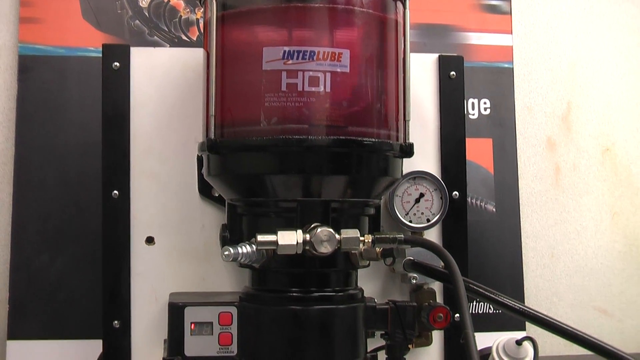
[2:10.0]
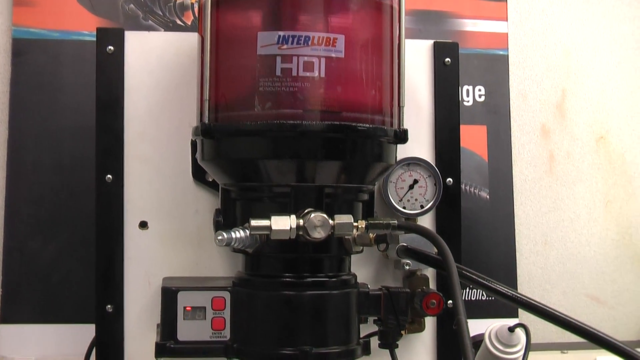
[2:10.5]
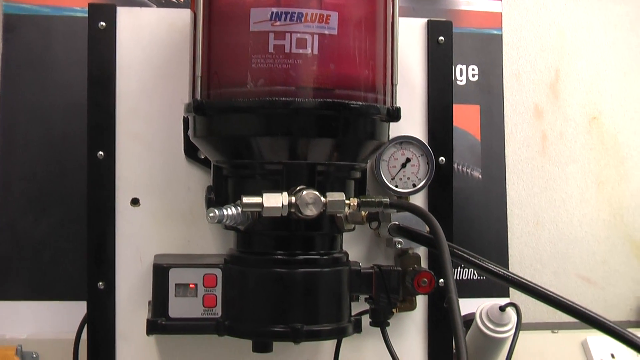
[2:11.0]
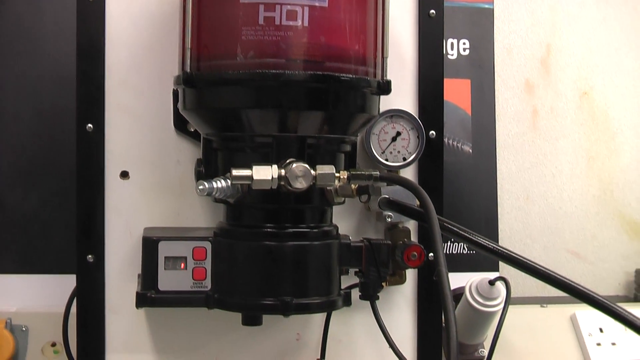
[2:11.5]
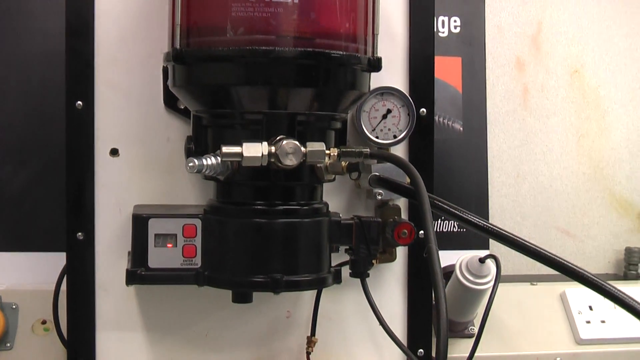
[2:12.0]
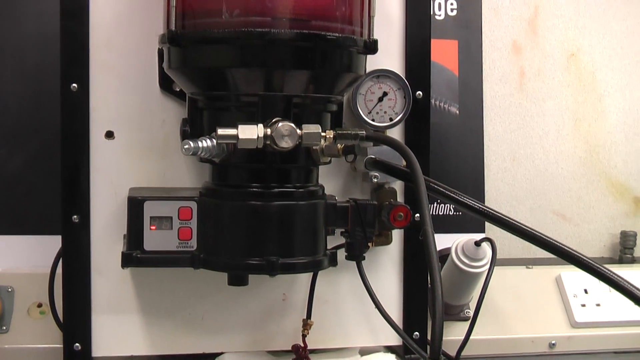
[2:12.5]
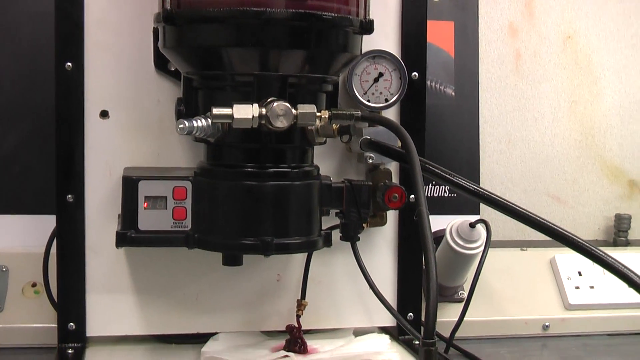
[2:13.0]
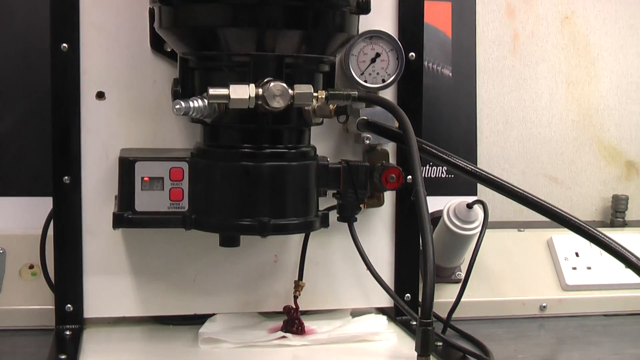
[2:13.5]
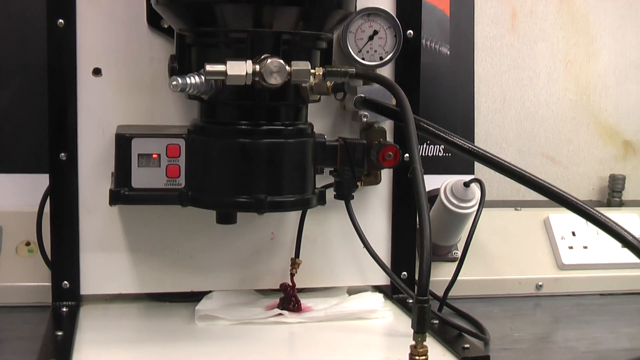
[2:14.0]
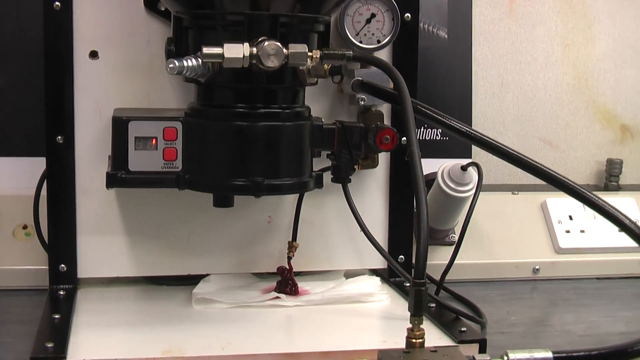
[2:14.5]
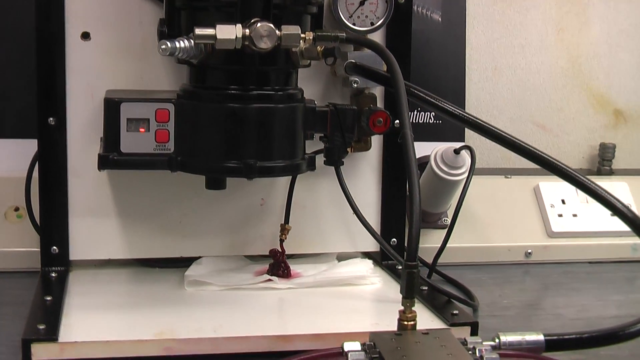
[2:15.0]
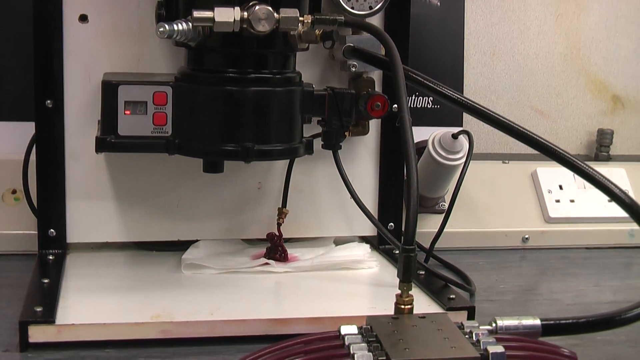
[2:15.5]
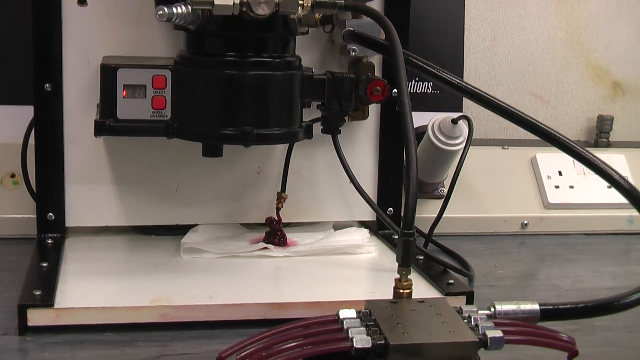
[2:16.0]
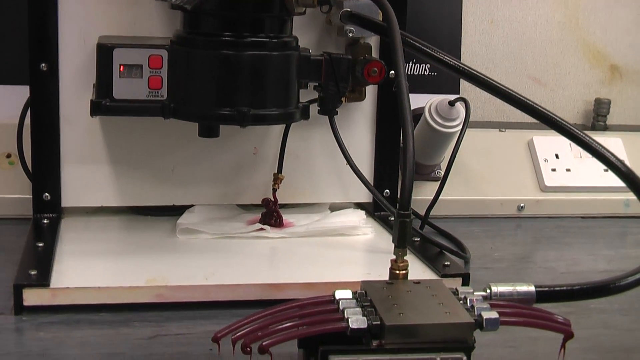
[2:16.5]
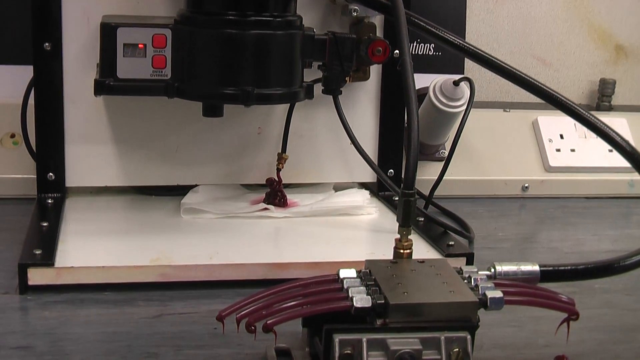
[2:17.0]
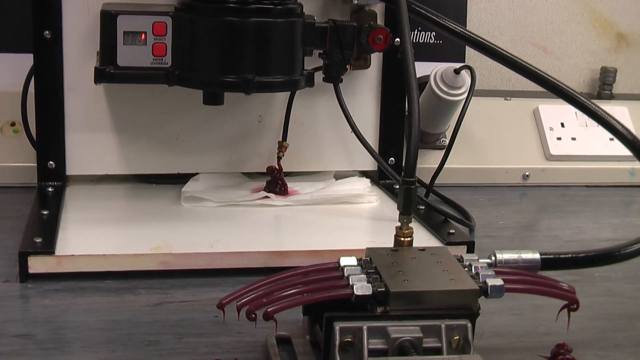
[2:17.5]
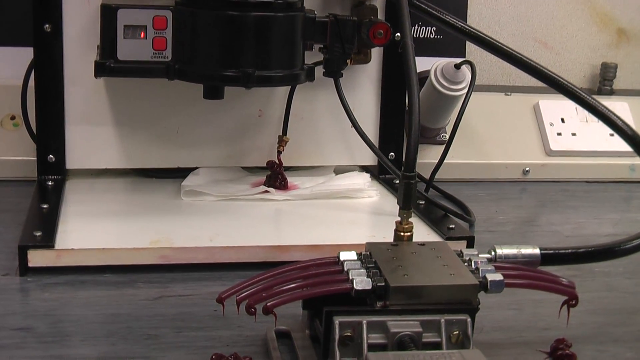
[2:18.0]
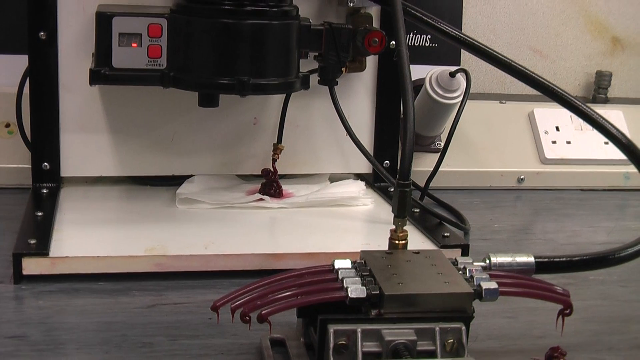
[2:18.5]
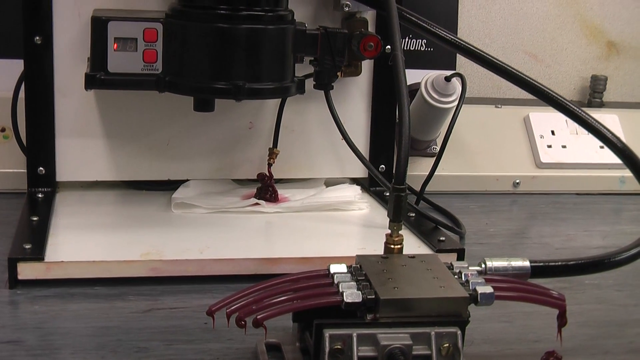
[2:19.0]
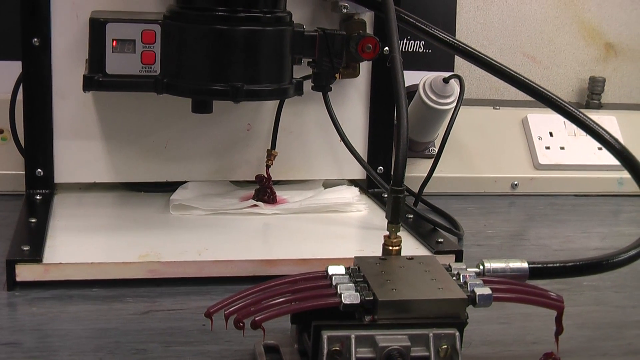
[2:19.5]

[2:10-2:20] The machine has black tubes and a small meter that says "interloop, HDI." Something is going around inside the tank. It seems to be some type of AC or HVAC system. It has two buttons on the side, one labeled "select" and one saying something about enter/override. The camera looks down, showing a tube part that is kind of touching a table but is on top of a paper towel; it looks wet and is kind of bleeding onto the paper towel. There are many cords and tubes.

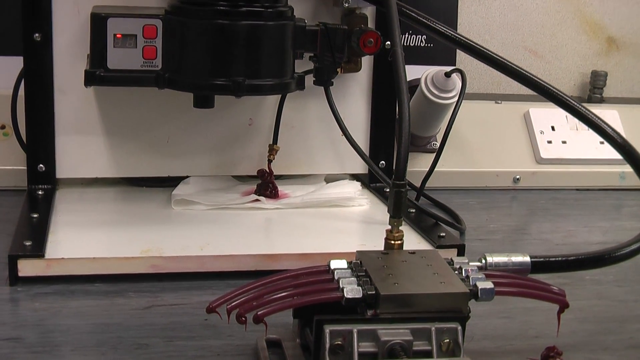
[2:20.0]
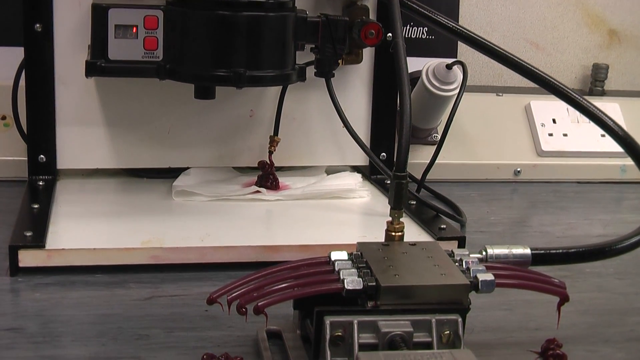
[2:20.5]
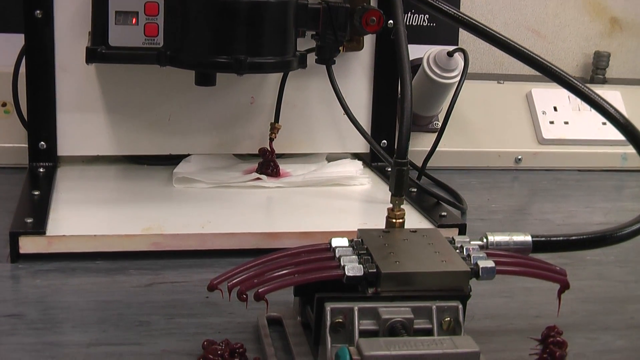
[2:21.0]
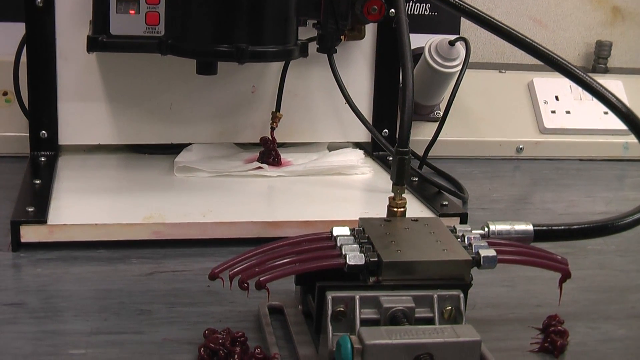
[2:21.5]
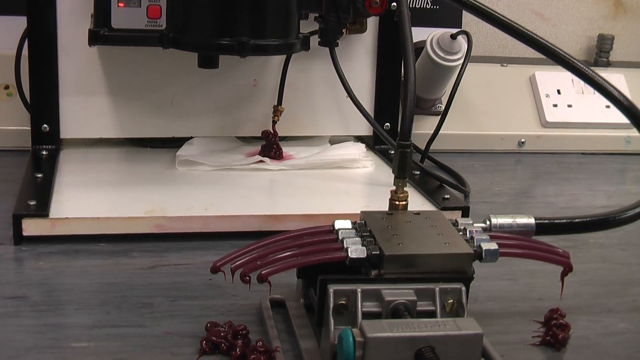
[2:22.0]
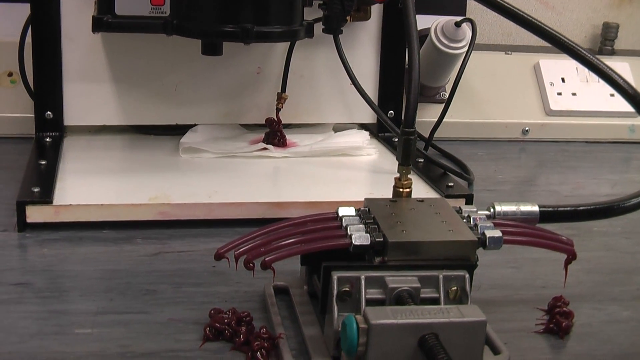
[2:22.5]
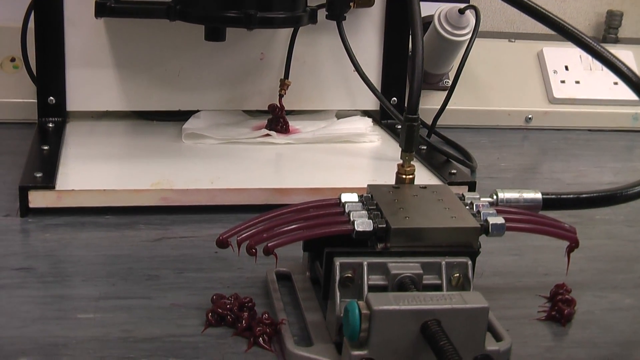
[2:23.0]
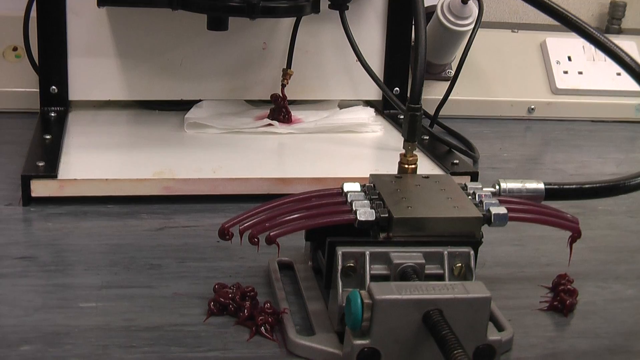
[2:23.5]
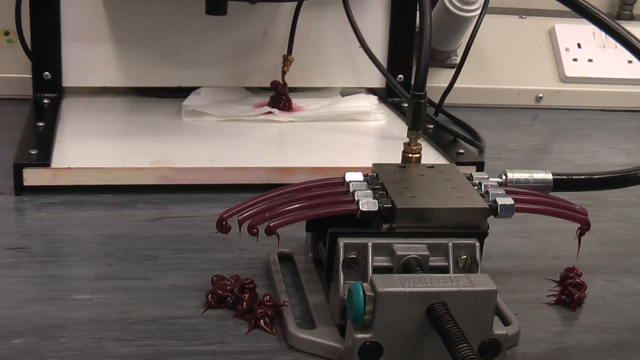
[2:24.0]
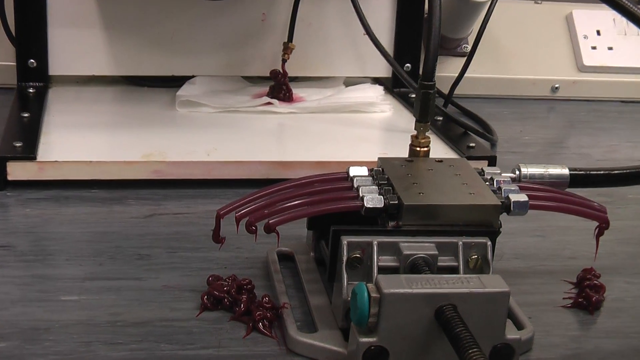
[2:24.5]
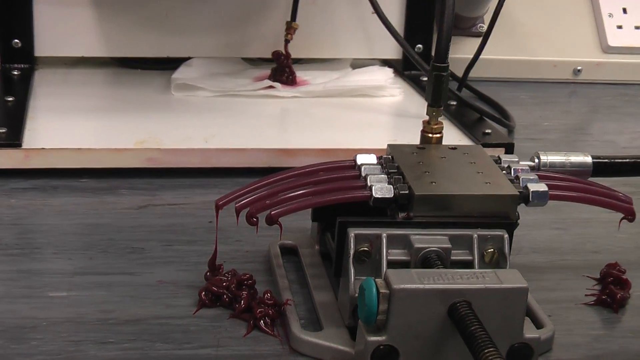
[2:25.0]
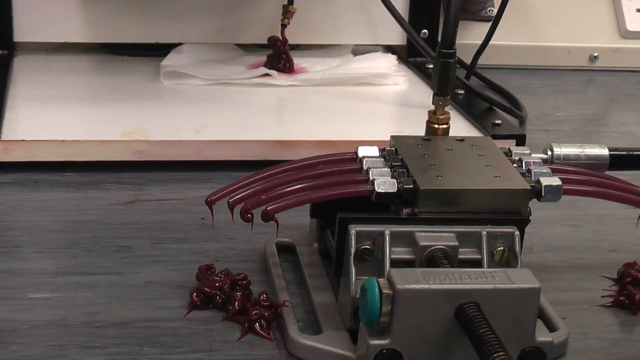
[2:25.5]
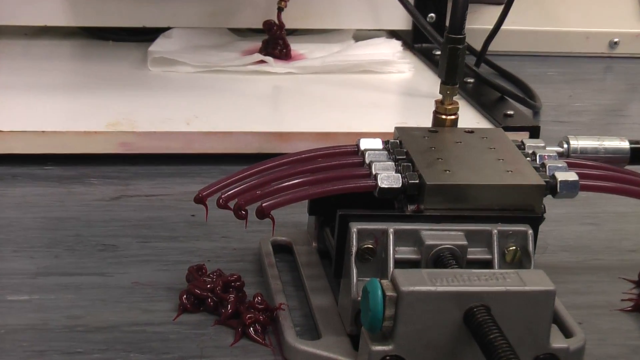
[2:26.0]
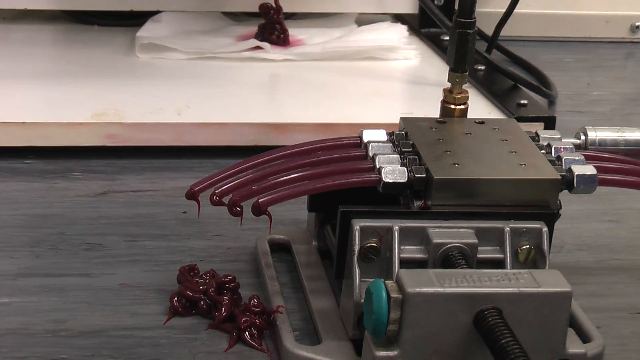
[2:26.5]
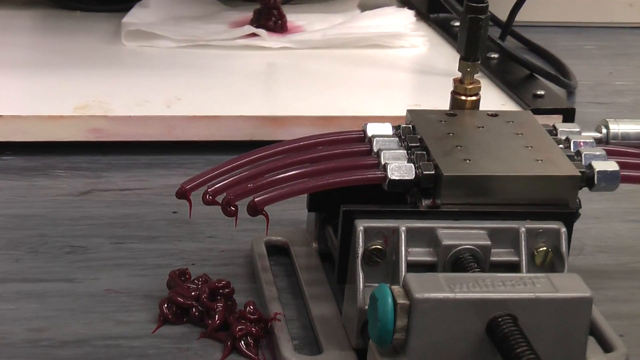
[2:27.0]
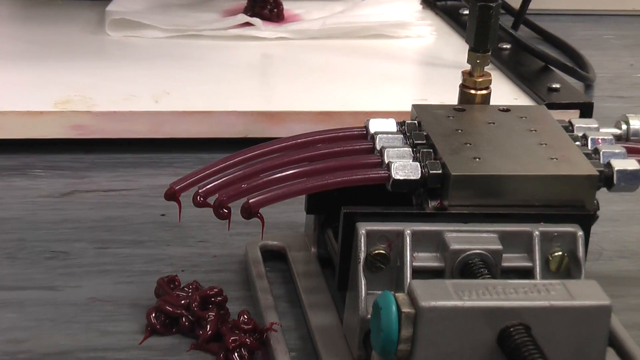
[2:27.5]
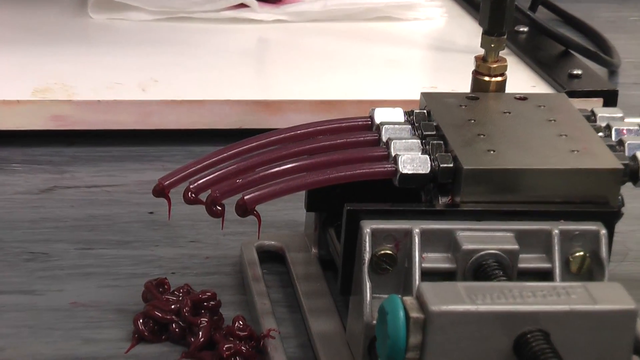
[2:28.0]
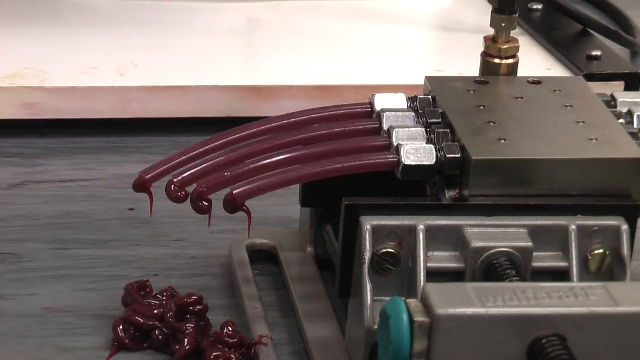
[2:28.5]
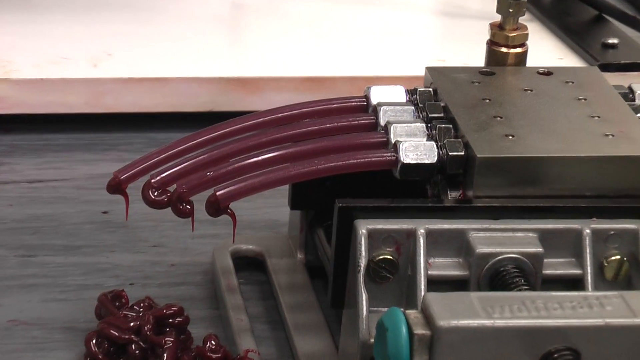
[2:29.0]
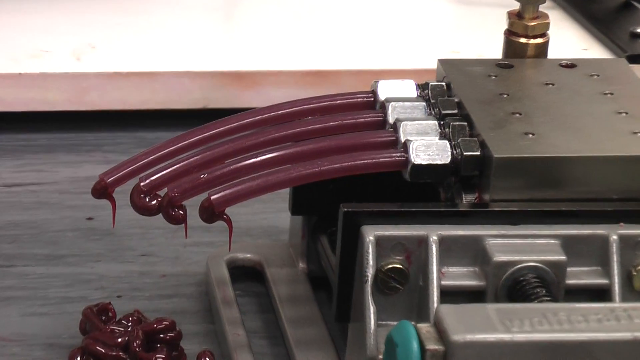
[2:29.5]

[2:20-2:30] The camera looks at a machine that appears to be some type of AC or HVAC system. Part of the cords is on a paper towel, and what looks like some kind of liquid is coming out and bleeding onto the towel. The machine has two buttons, one labeled "select" and one saying something about enter/override. The camera moves down, and at the very bottom of the machine several tubes are squirting what looks like jelly or purple slime.